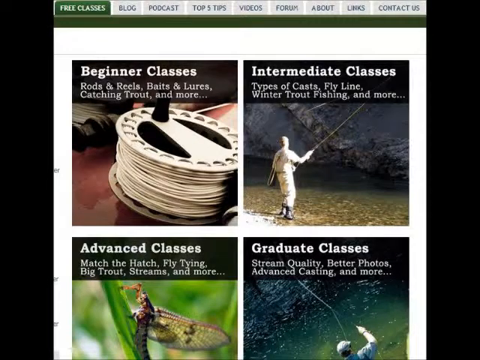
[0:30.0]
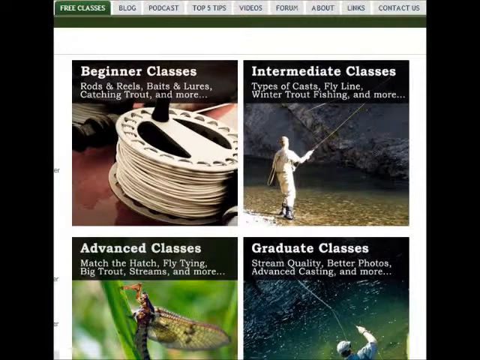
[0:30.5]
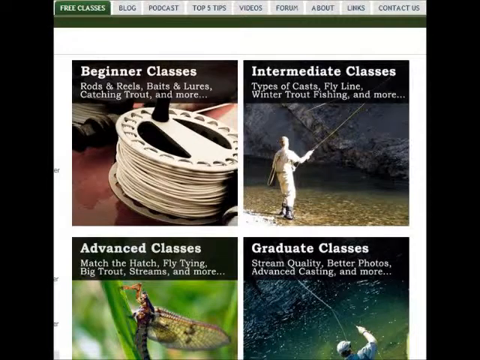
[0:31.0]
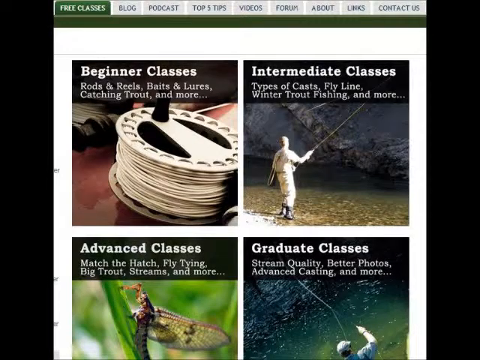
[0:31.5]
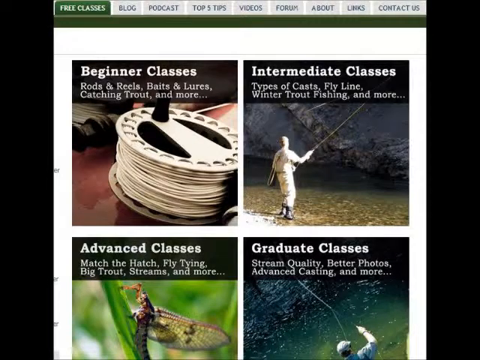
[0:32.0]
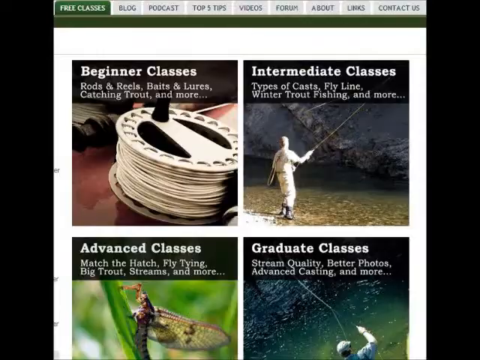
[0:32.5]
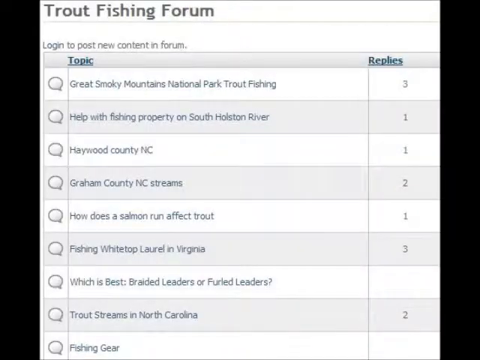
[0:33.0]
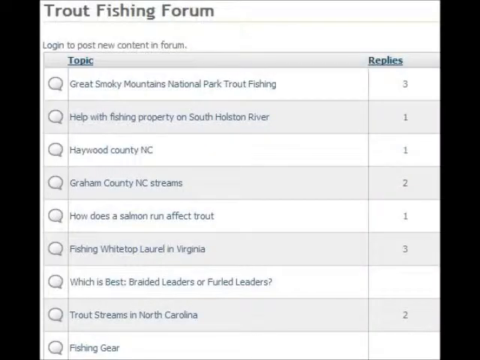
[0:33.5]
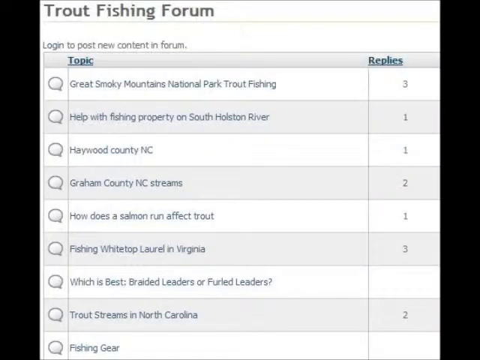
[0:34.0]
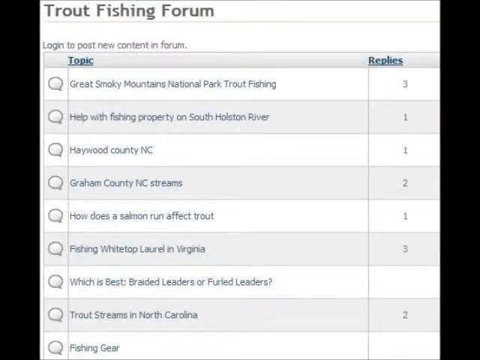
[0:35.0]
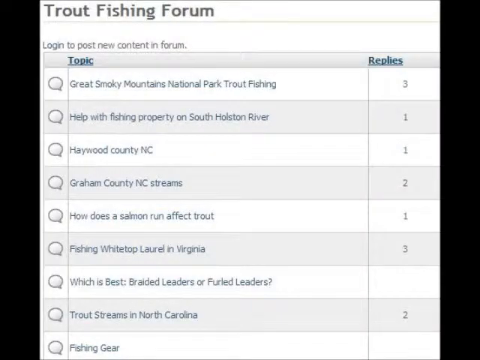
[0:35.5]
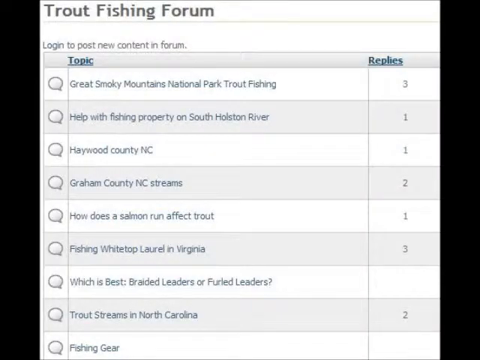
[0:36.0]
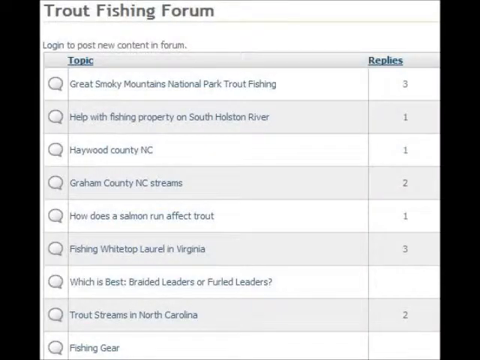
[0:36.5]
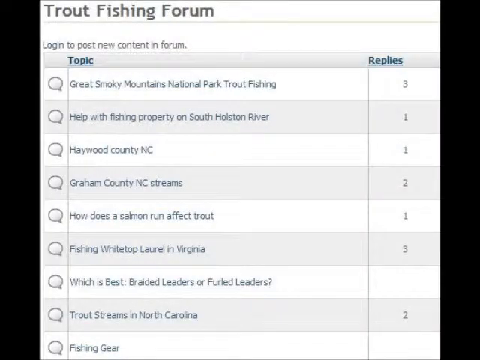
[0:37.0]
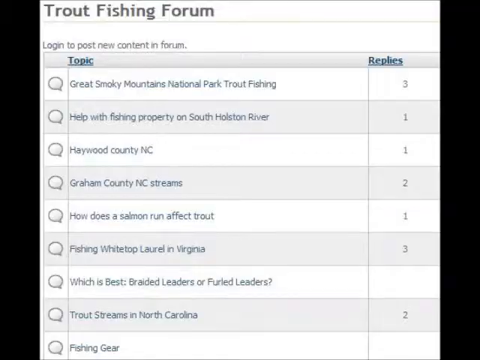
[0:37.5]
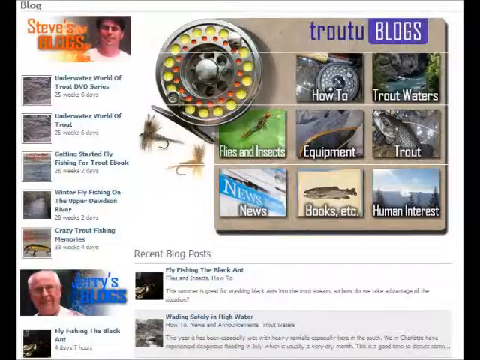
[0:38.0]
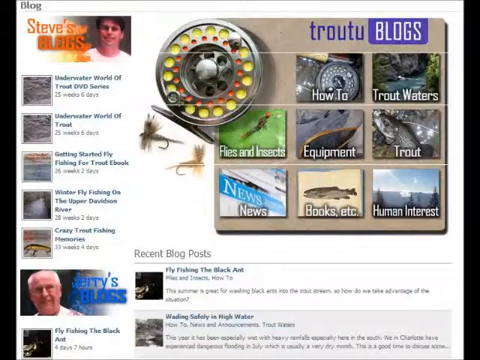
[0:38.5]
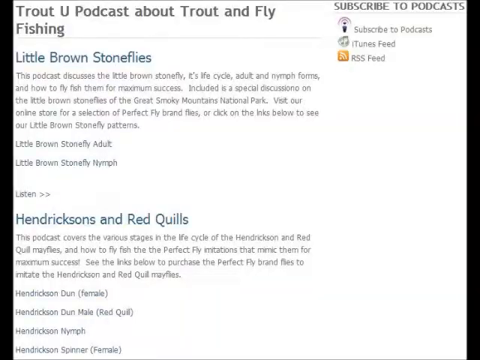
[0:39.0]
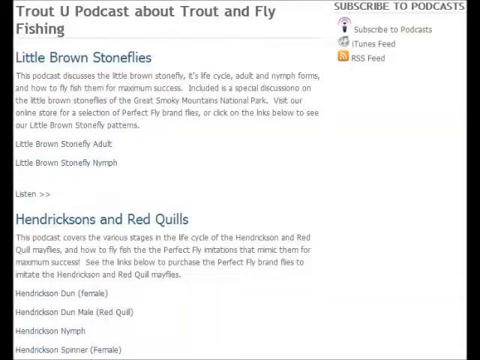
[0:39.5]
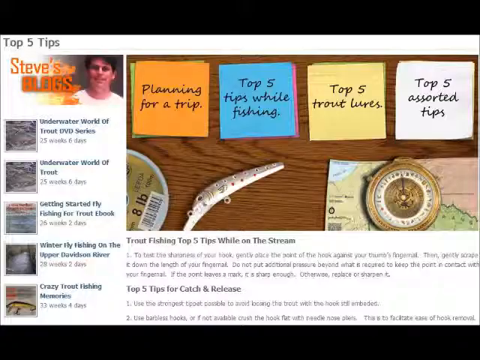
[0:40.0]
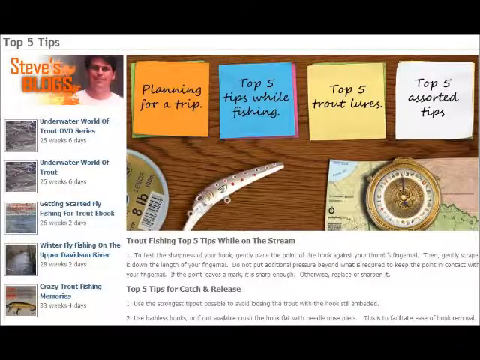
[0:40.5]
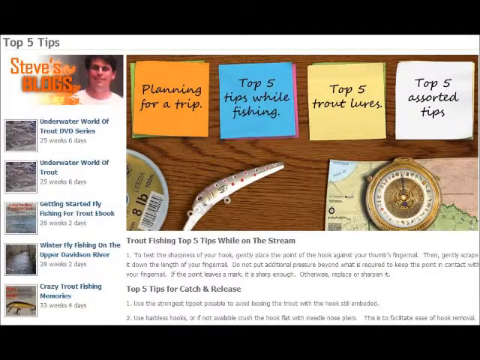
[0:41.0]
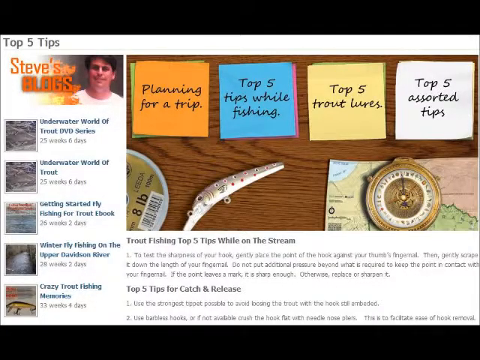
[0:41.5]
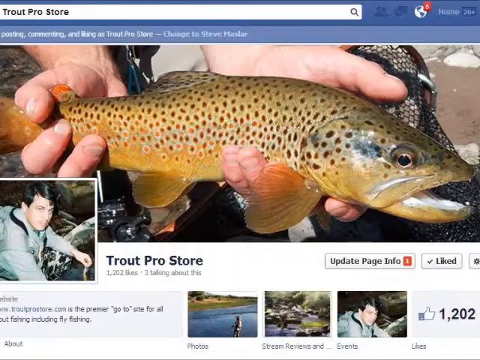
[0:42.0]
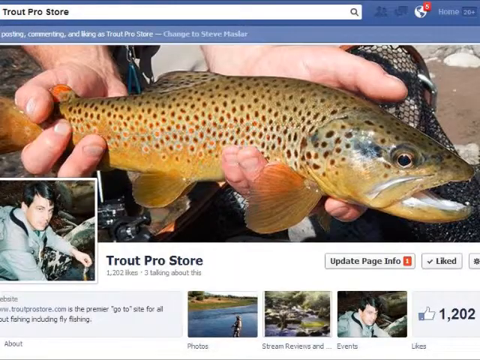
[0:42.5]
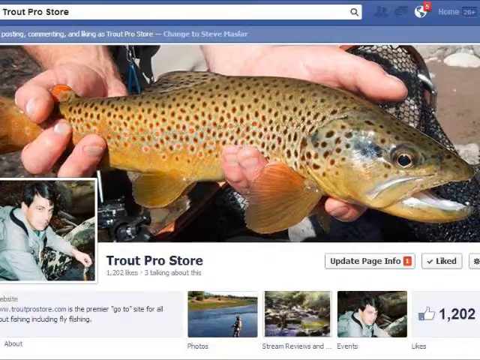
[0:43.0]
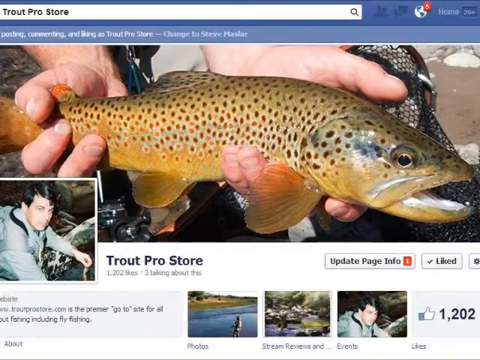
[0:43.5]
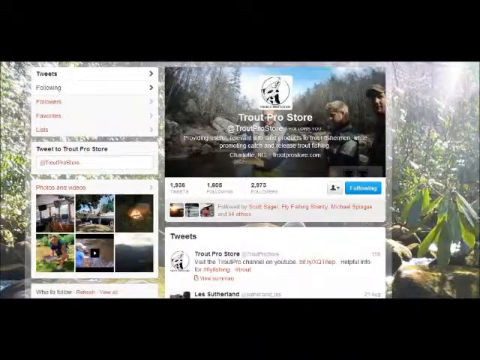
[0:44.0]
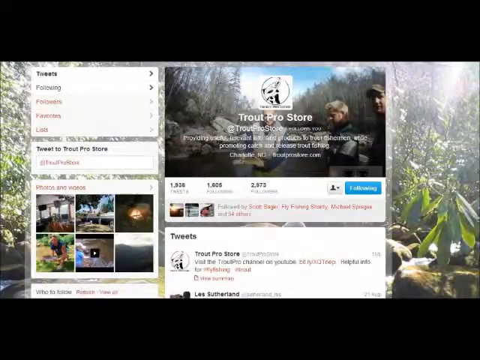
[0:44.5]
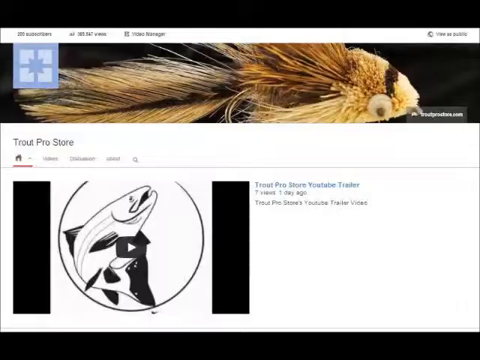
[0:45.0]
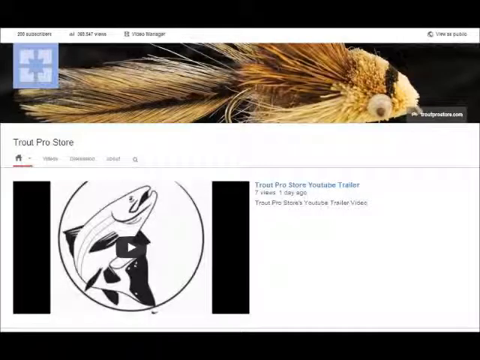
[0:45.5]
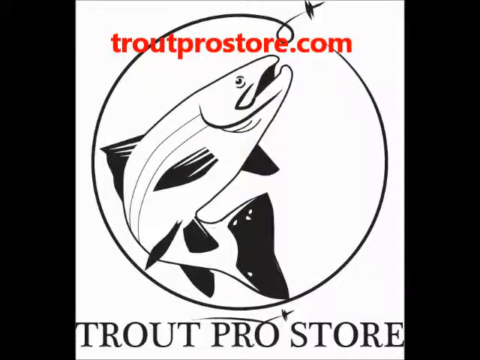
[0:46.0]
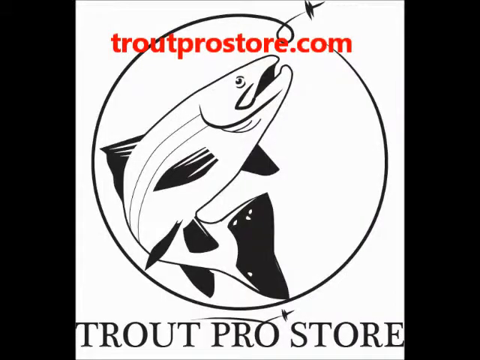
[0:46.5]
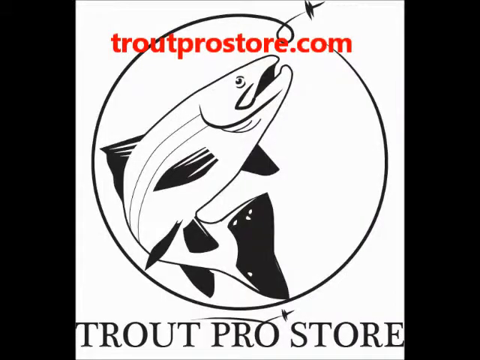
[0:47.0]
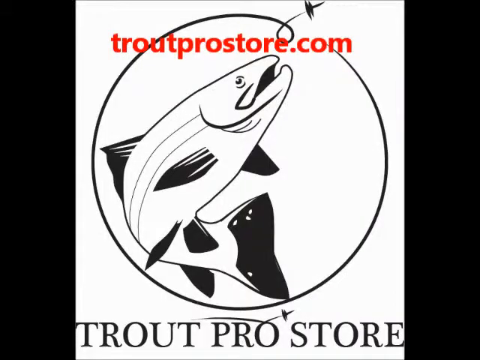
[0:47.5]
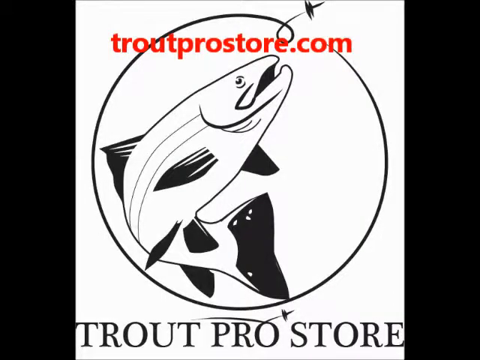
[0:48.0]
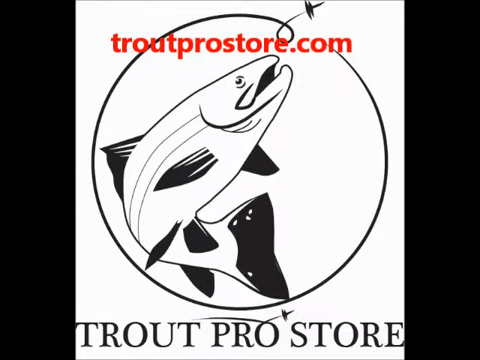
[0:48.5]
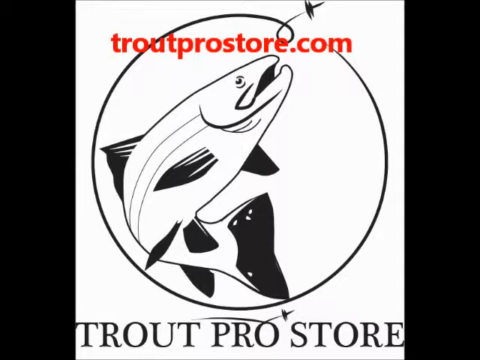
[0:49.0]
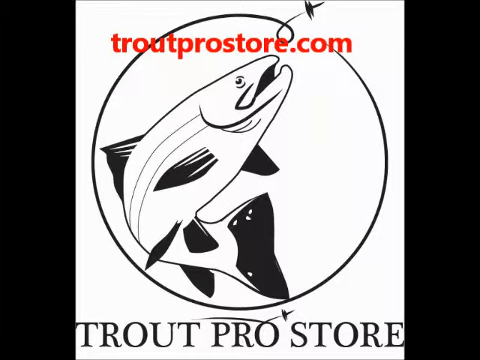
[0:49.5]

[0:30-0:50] More words from a website continue on the screen, reading "free classes, blog, podcast, top five tips, videos, forum, about links, contact us, beginner classes, rods and reels, baits and lures, catching trout and more. Intermediate classes, types of casts, fly line, winter trout fishing and more. Advanced classes, match the hatch, fly tying, big trout, streams and more. Graduate classes, stream, quality, better photos, advanced casting and more. Trout fishing forum, log in to post new content and forum topic. Great Smoky Mountains National Park trout fishing, replies three, help with fishing property on South Holston River, one." The video ends with a logo of a black and white fish. At the top it says "TroutProStore.com" and at the bottom center of the screen it says "Trout Pro Store". The entire video is rectangular in shape and entirely computer generated.